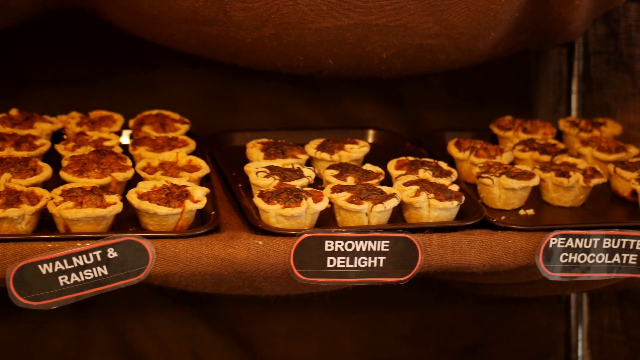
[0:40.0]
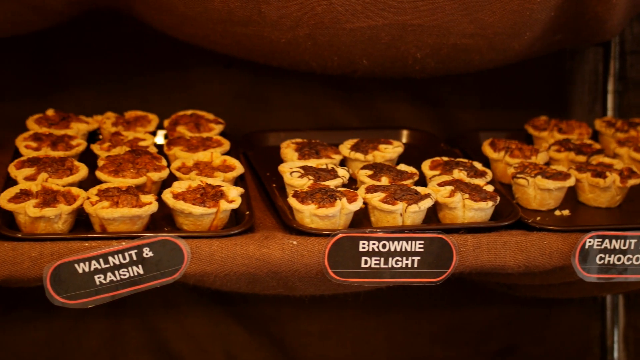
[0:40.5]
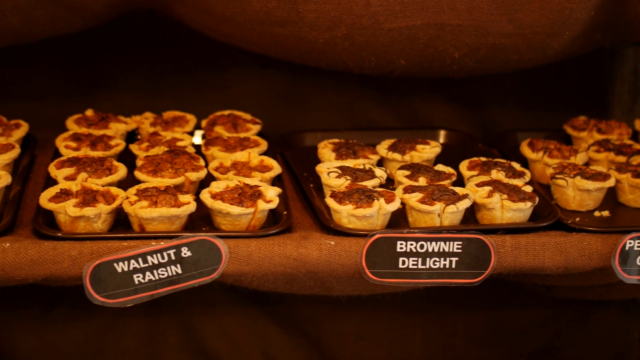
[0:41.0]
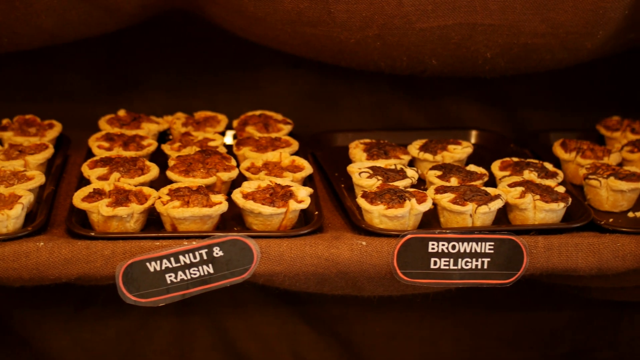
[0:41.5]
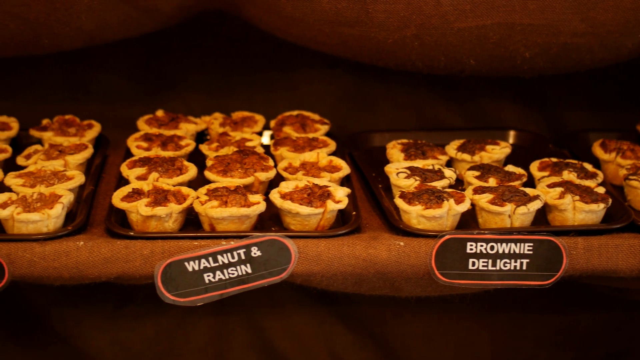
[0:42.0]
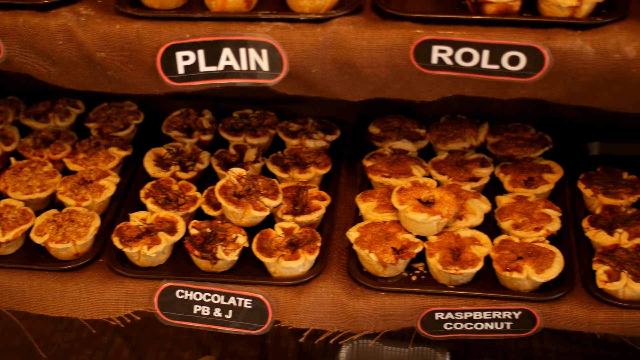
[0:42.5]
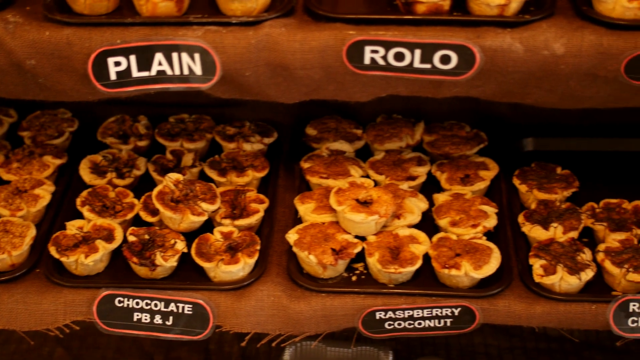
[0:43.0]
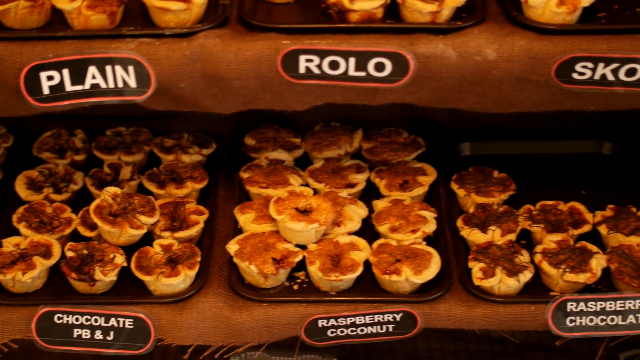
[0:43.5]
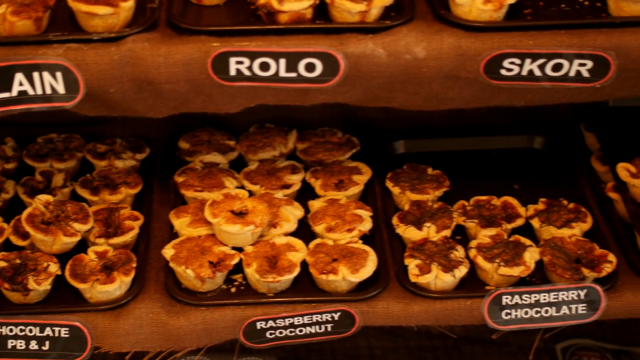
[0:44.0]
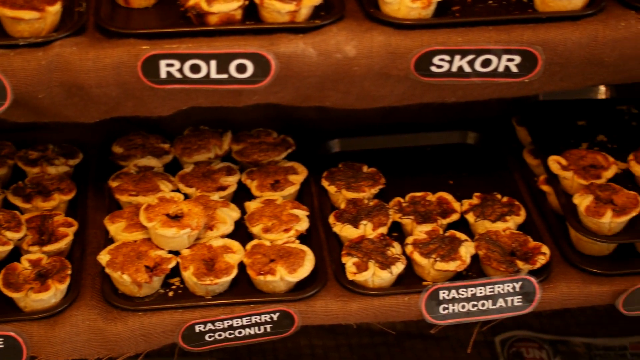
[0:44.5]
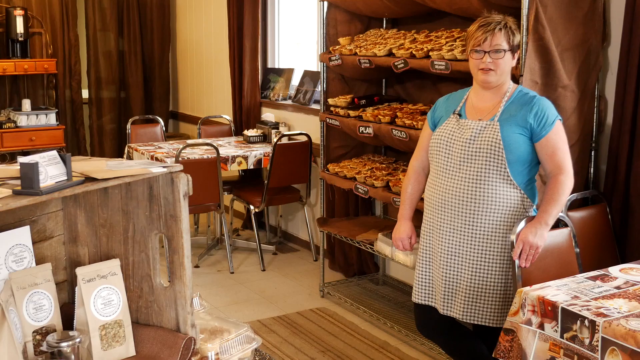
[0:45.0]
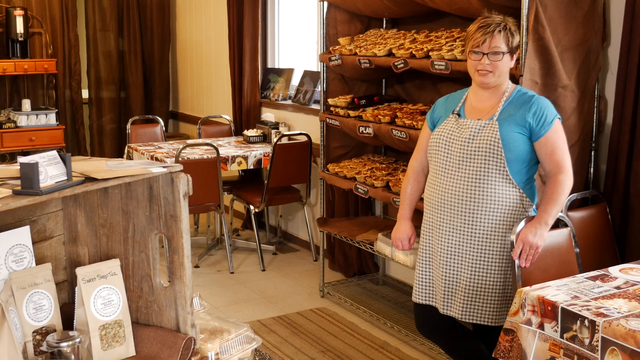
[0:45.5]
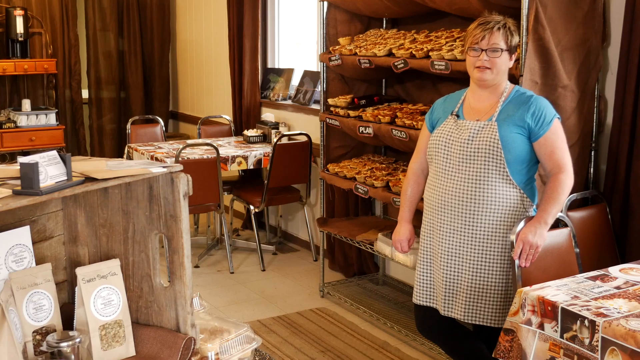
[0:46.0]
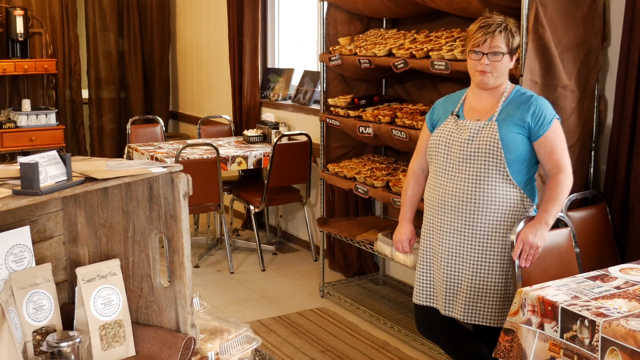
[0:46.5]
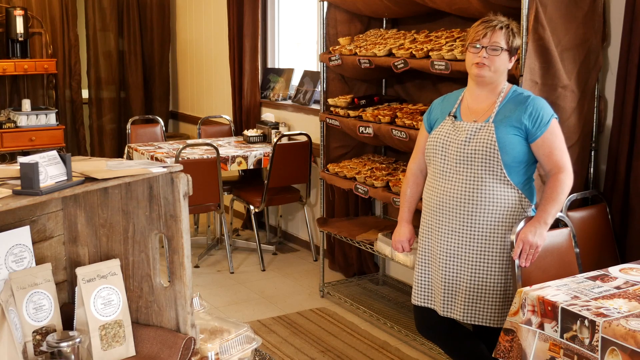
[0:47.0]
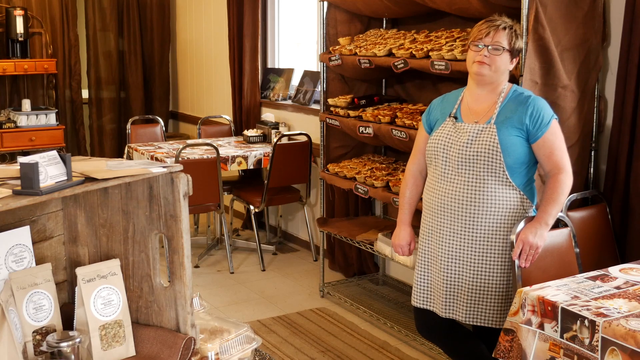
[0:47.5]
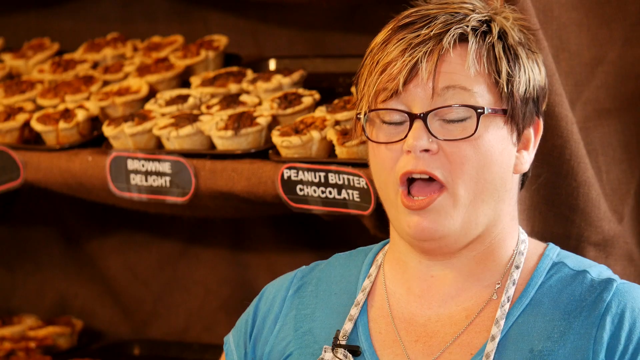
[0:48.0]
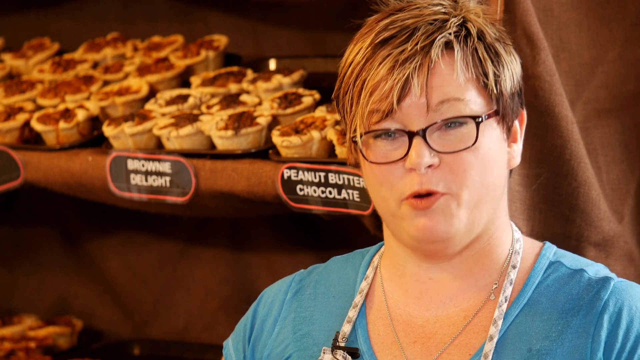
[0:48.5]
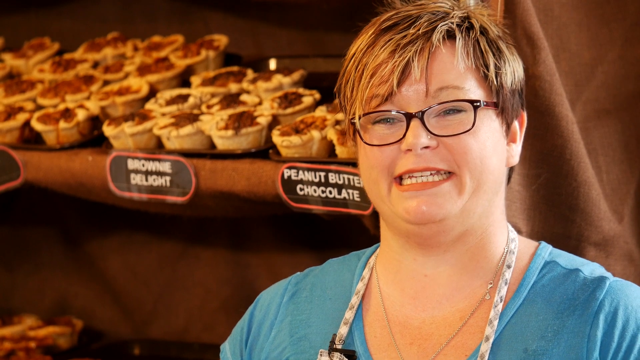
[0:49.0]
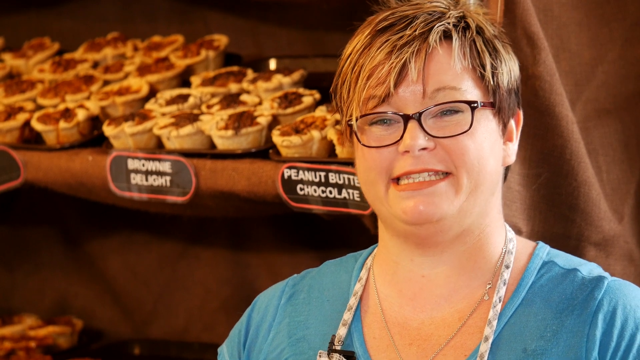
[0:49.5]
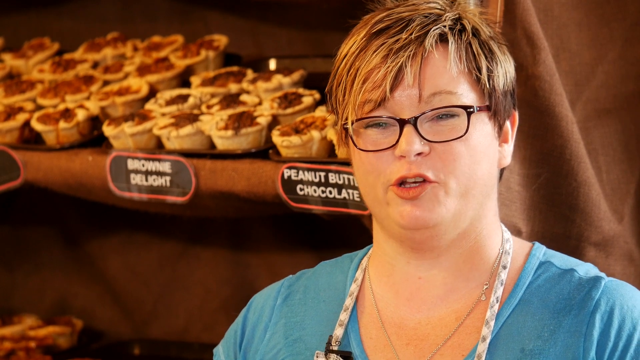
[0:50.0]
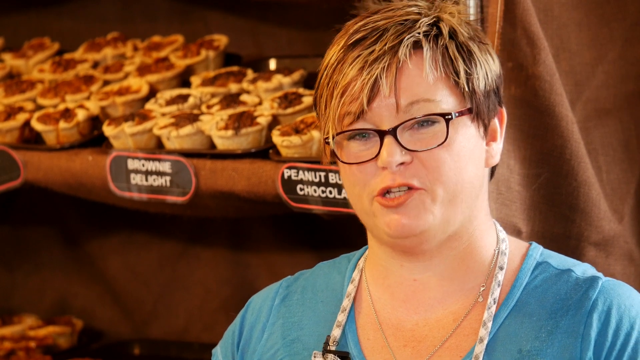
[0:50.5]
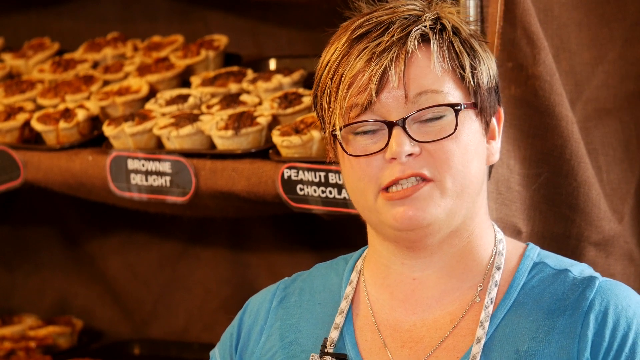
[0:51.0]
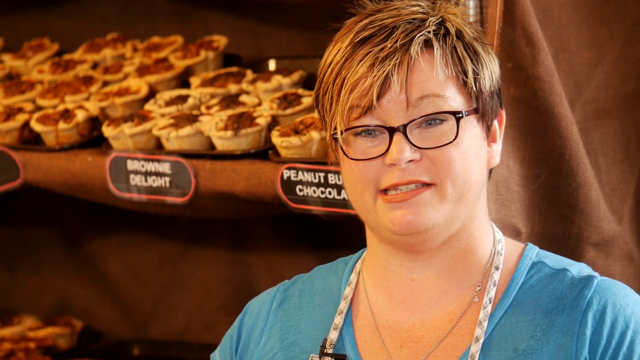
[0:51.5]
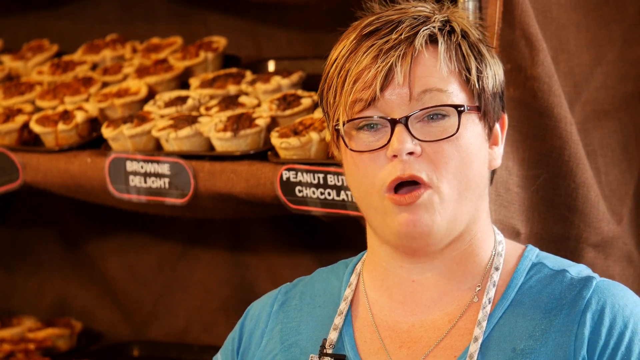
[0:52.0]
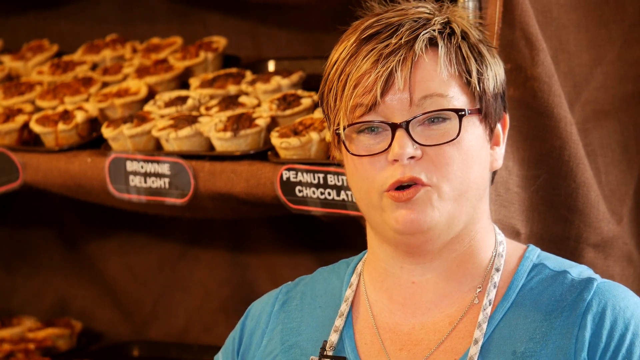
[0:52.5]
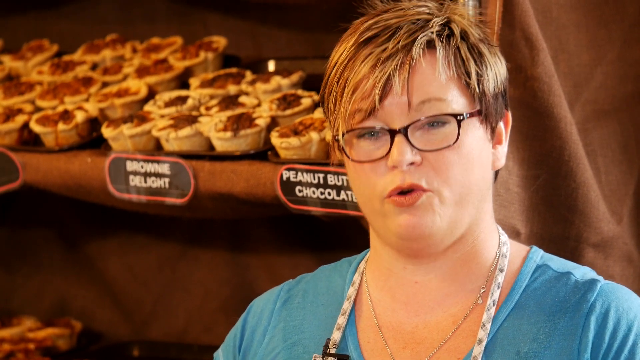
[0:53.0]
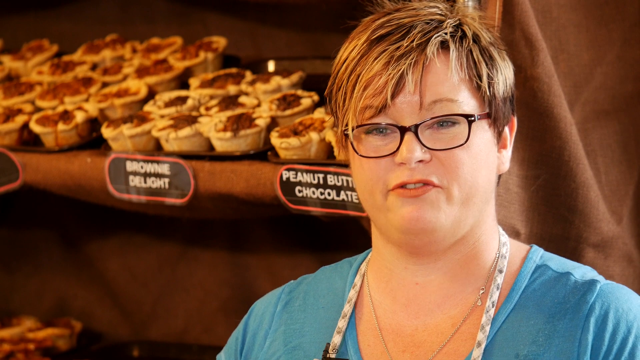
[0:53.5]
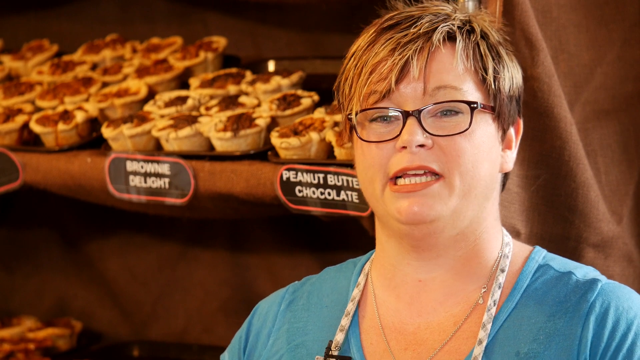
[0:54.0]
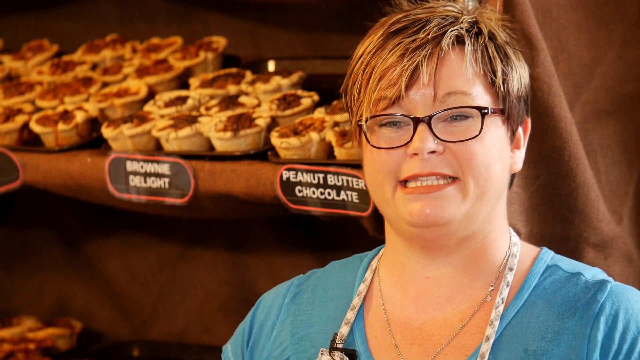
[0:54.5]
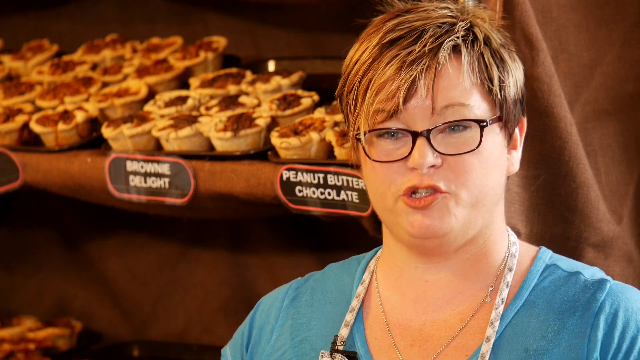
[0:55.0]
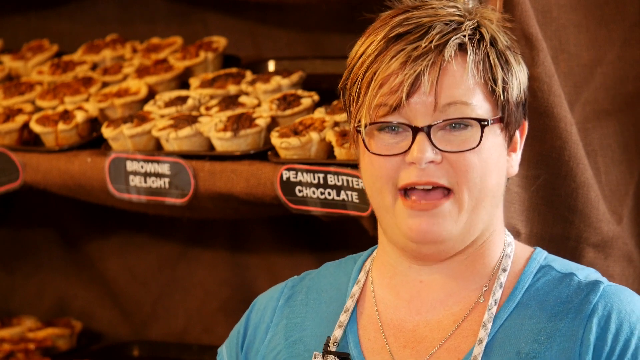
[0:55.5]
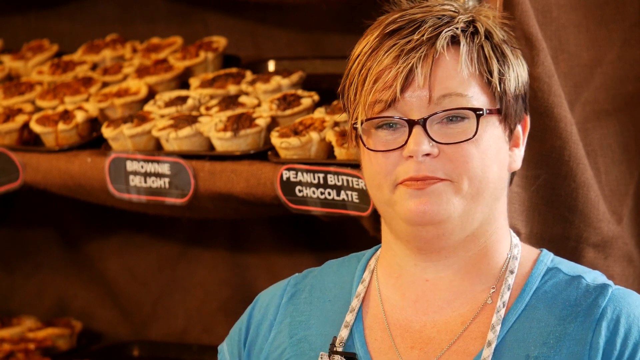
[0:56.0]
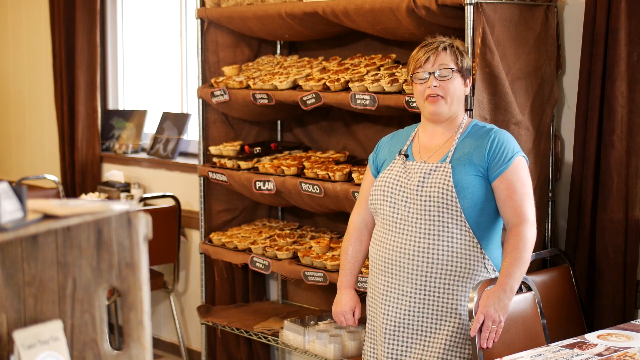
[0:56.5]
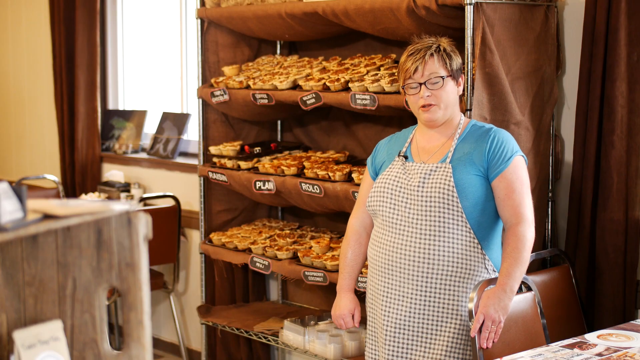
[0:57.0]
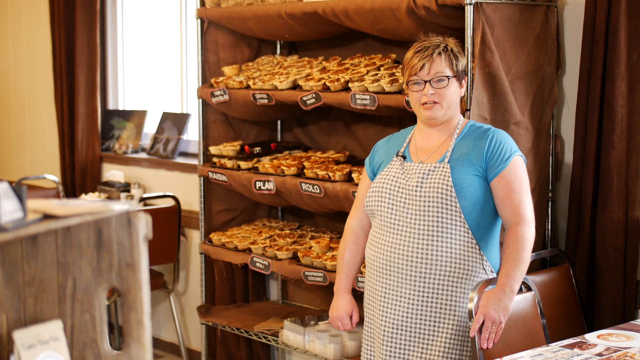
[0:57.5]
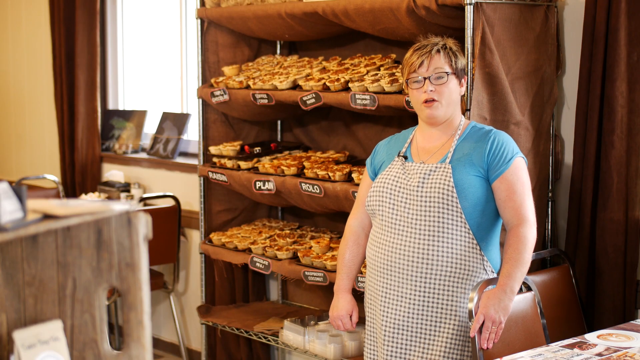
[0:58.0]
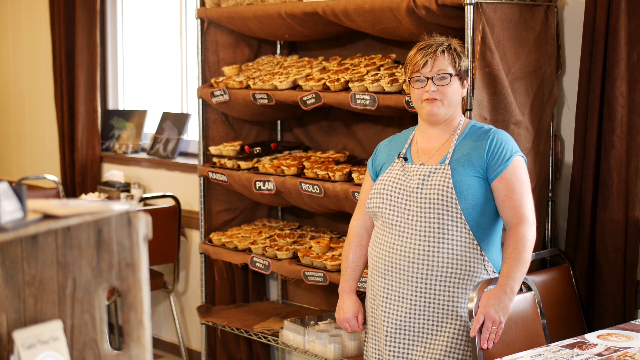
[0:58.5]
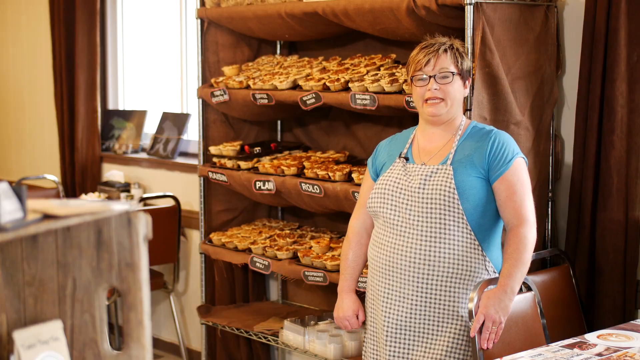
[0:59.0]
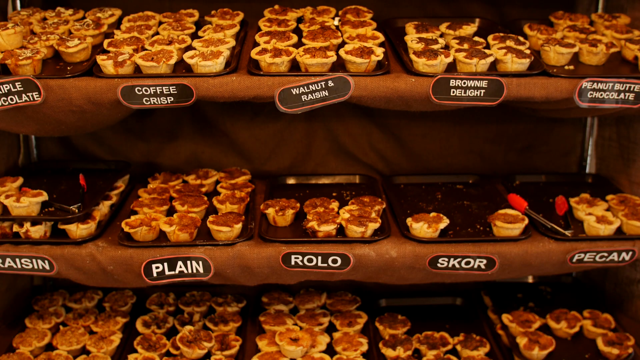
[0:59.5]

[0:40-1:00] The woman is standing inside the store and seems very excited. The store is stocked with different flavors of cupcakes. The shelves are nicely packed, and the place is clean.